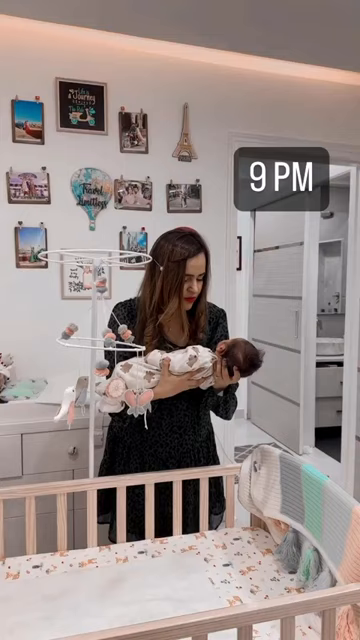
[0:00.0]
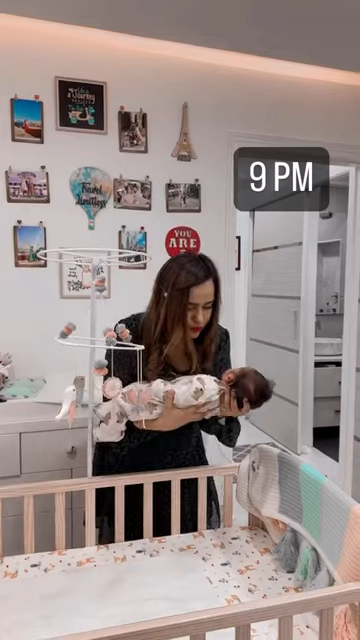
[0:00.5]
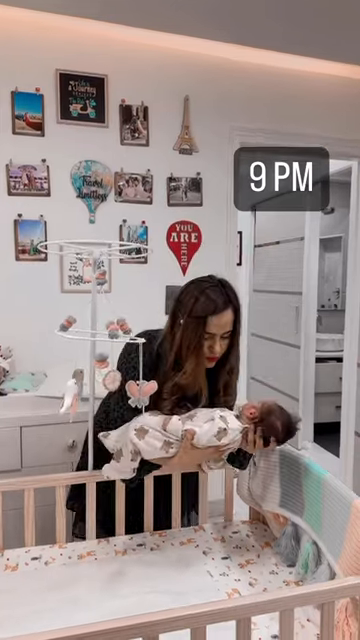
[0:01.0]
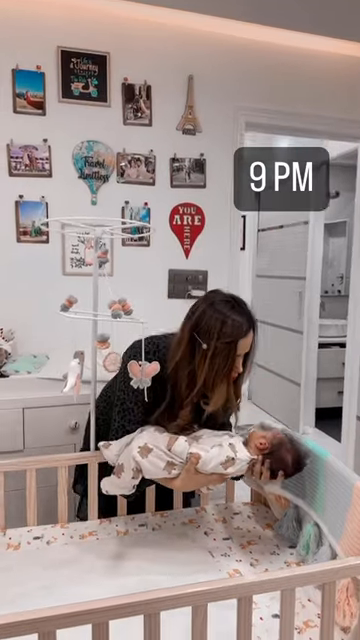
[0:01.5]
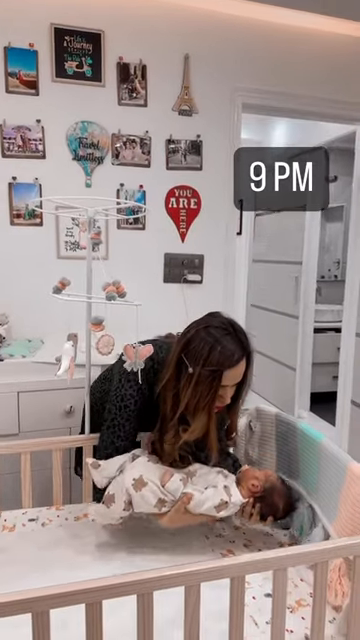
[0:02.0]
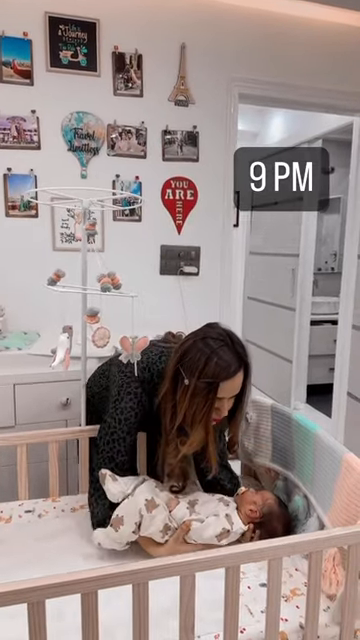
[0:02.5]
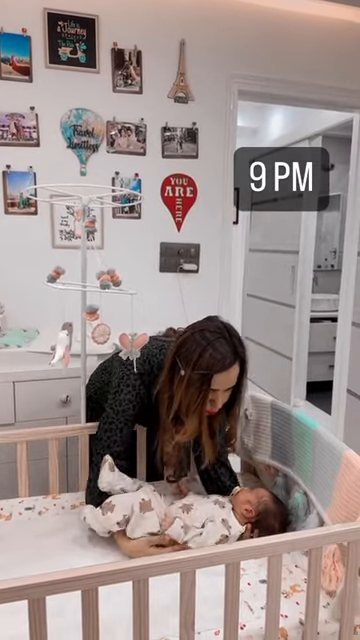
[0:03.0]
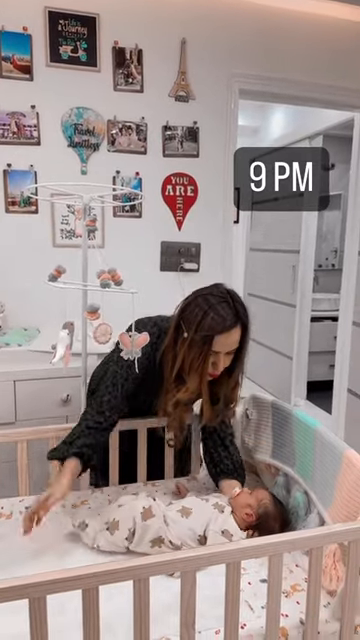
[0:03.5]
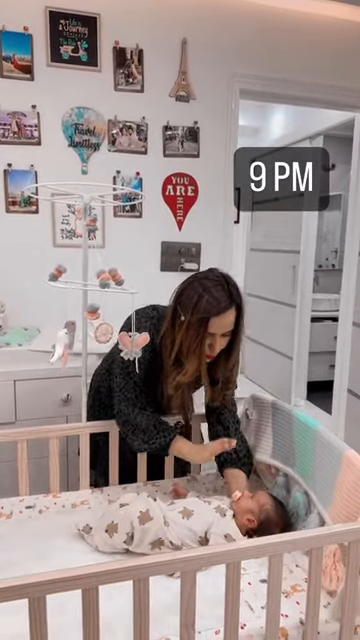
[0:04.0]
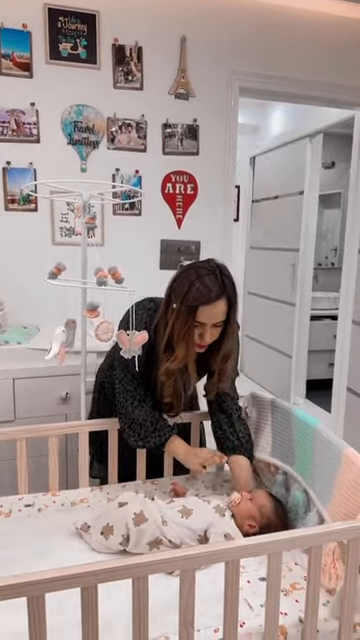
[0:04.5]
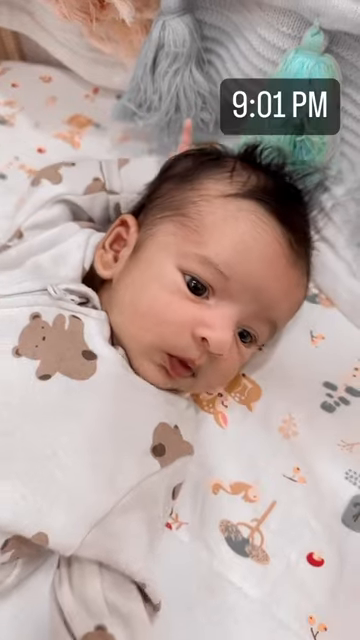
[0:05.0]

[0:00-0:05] The video is titled Putting a Baby to Sleep, and the text "9pm" appears on screen. A mother holds a baby over a crib in a bedroom with white walls covered in a bunch of things, such as pictures, an Eiffel Tower and a hot air balloon. A mobile hangs over the crib, and there is a lot of decoration. The baby has a pacifier in as she lowers them into the crib onto their back. The camera cuts, and the baby is laying in the crib; the text reads "9.01pm", the pacifier is gone, and the baby is still awake, not asleep yet. The baby wears what looks like a sleeper onesie with brown teddy bears all over it, in a sort of white-beige color. There is a blanket on the end of the crib, but there is nothing in the crib: no pillows and no blankets.